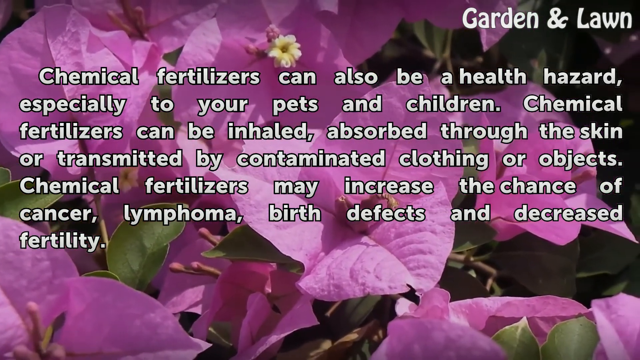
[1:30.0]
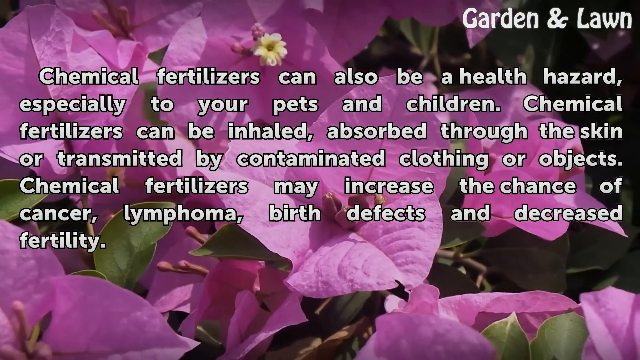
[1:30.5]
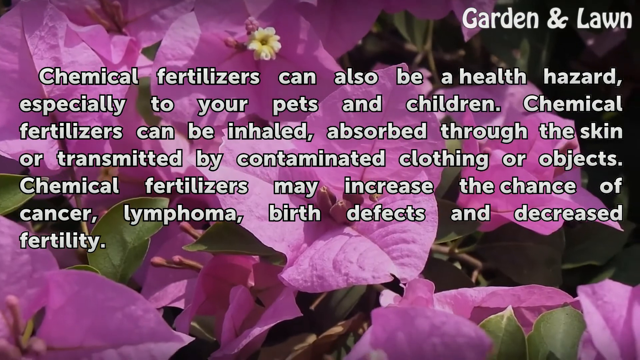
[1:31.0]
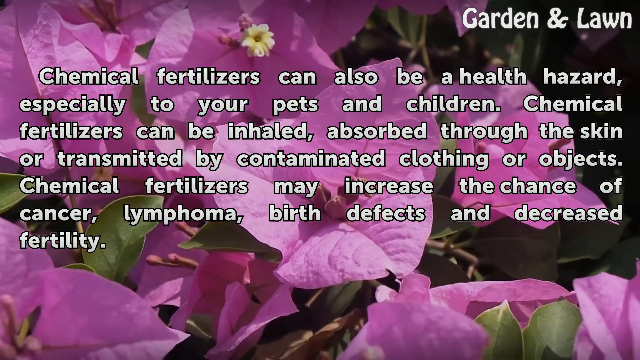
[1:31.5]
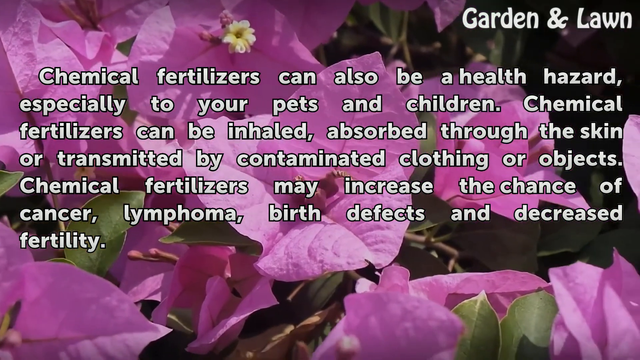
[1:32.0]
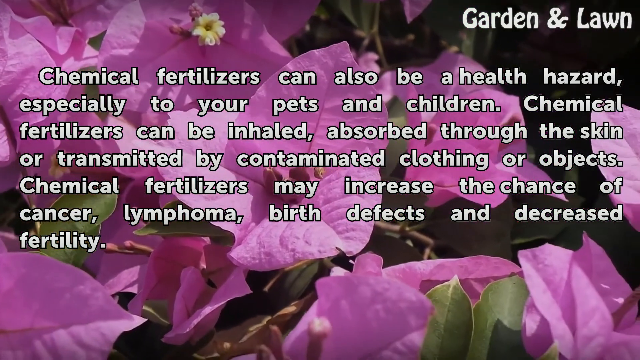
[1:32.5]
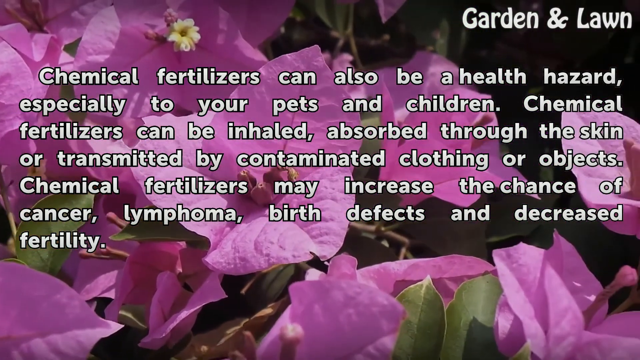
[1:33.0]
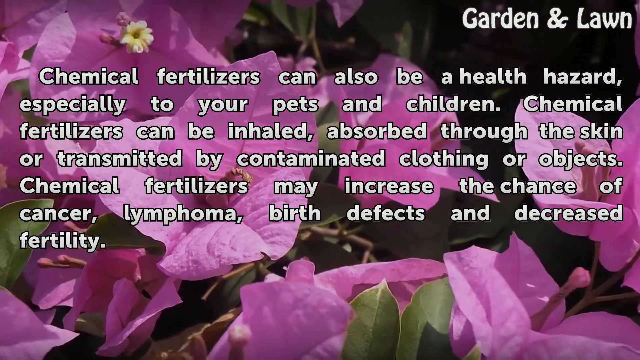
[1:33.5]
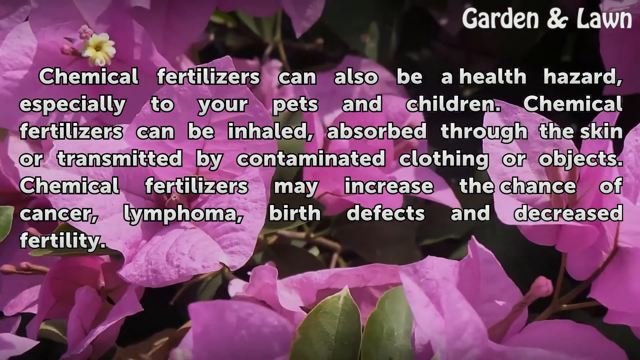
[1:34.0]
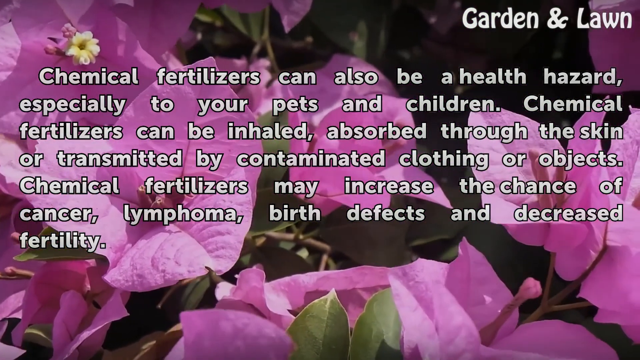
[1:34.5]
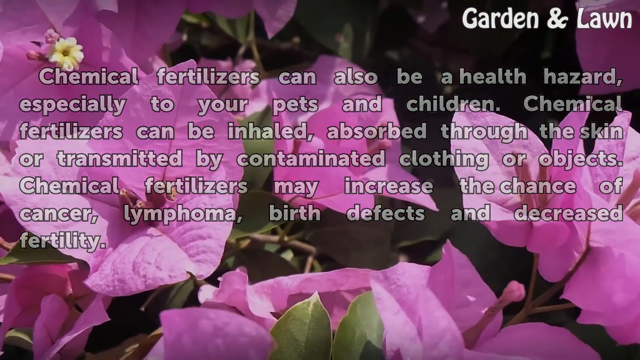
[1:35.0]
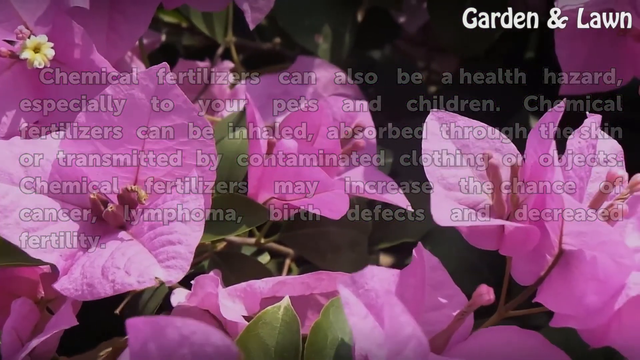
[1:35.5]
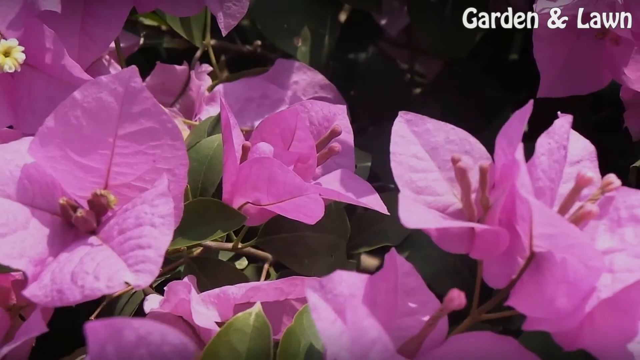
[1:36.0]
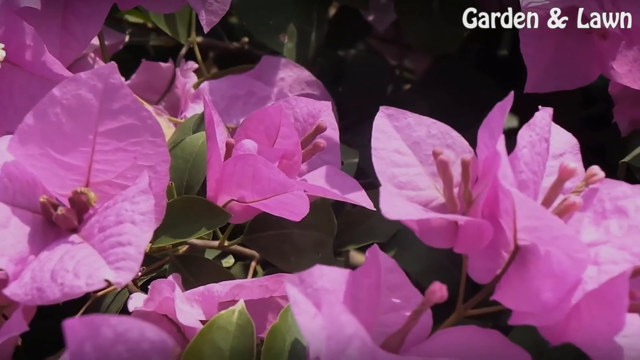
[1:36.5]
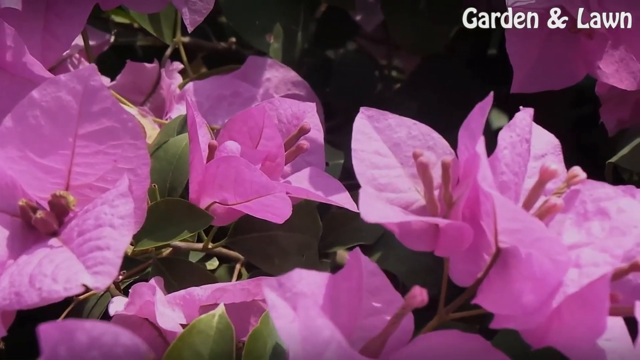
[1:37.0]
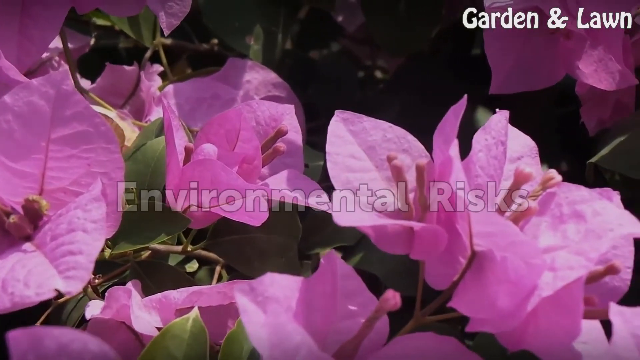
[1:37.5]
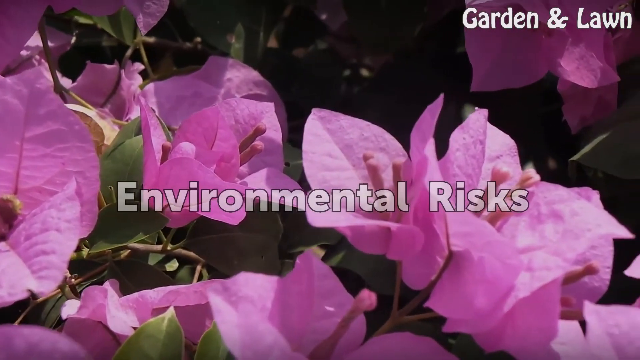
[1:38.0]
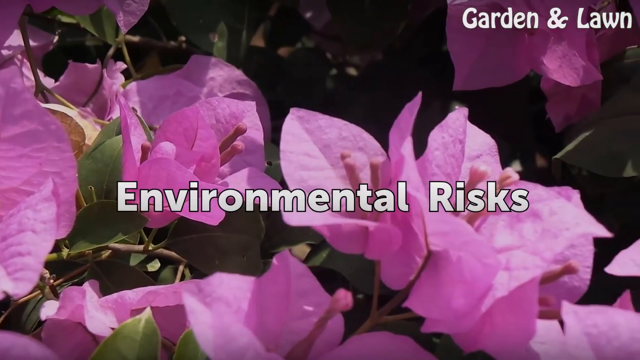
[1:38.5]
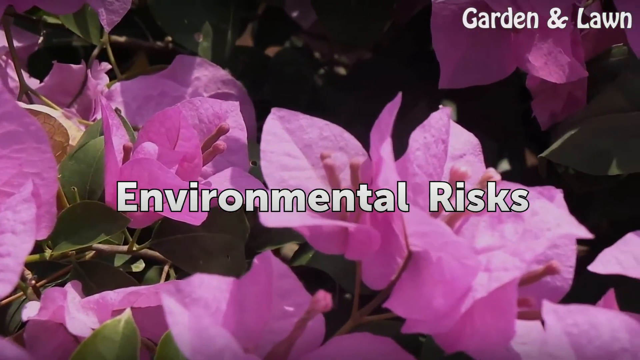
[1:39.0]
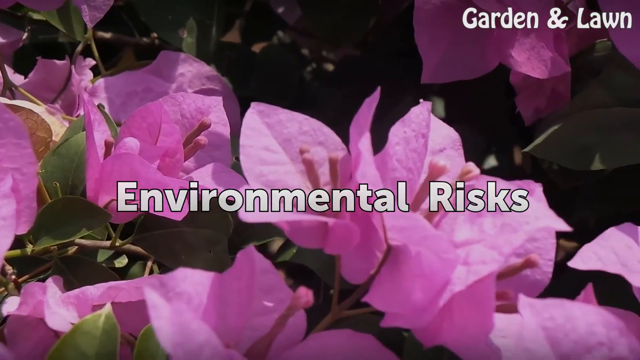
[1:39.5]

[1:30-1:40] The text disappears and new text reads "environmental risks". The camera pans towards the right, showing the flowers.